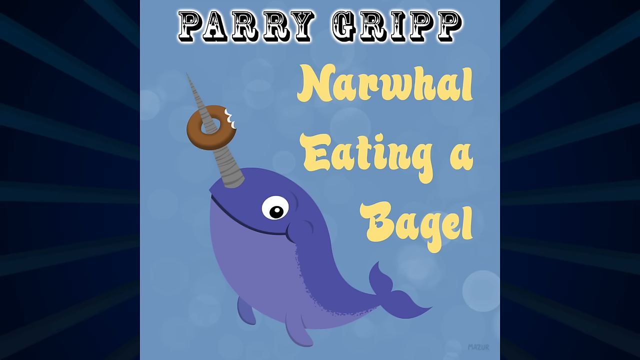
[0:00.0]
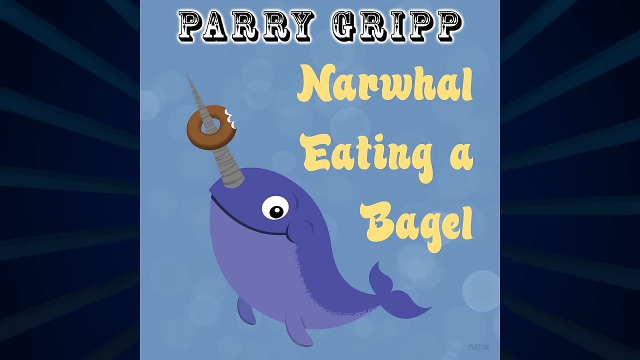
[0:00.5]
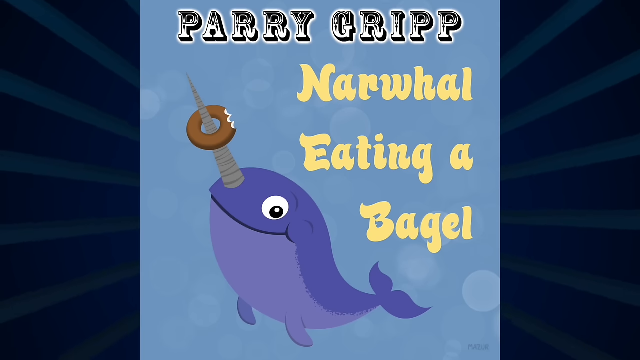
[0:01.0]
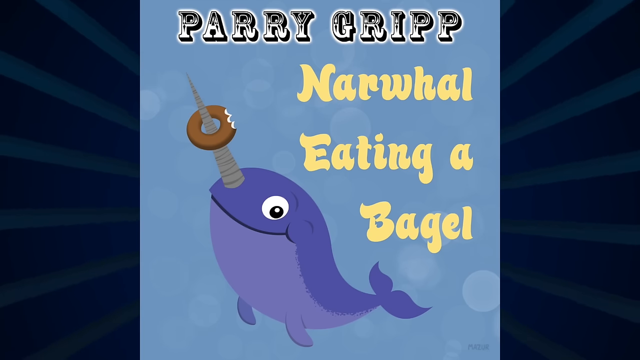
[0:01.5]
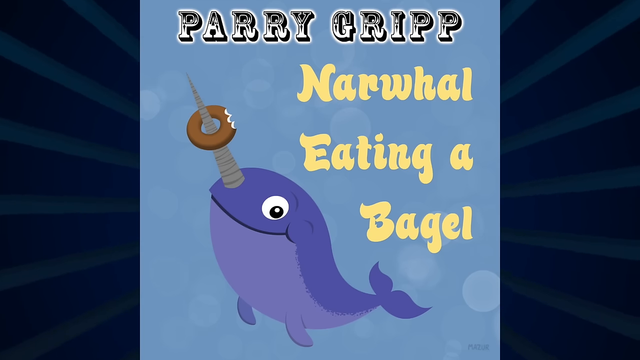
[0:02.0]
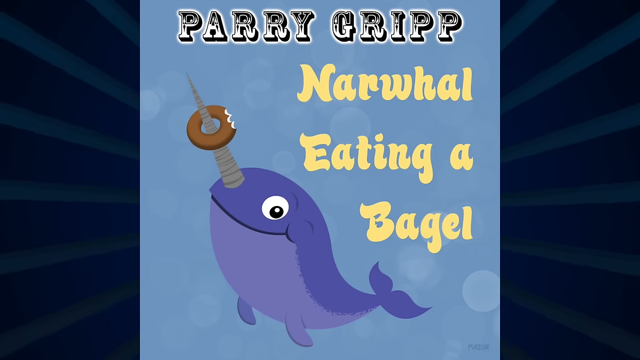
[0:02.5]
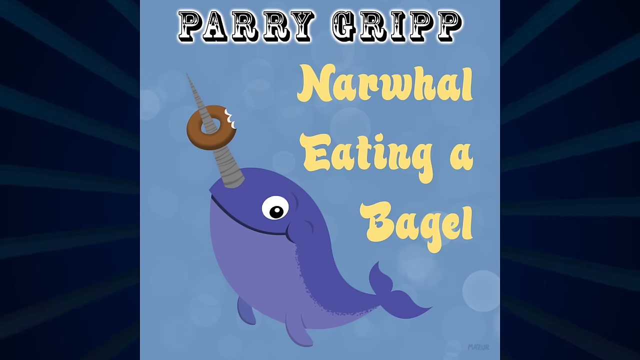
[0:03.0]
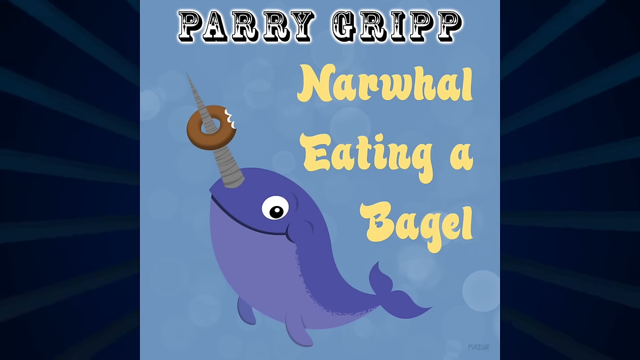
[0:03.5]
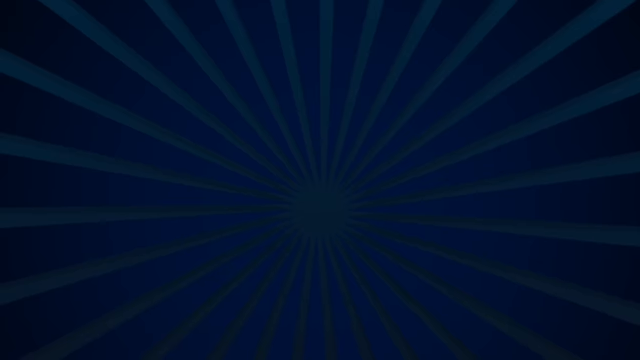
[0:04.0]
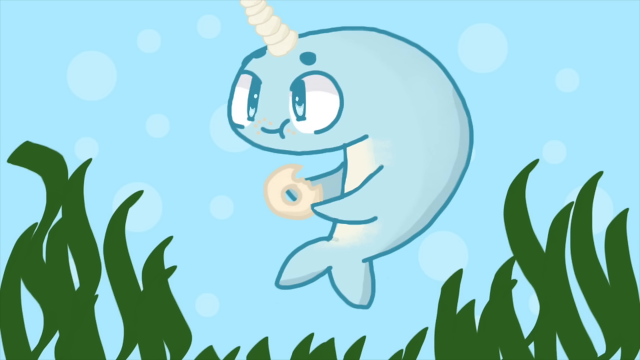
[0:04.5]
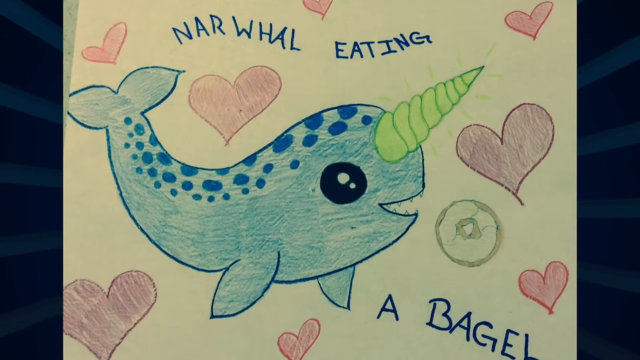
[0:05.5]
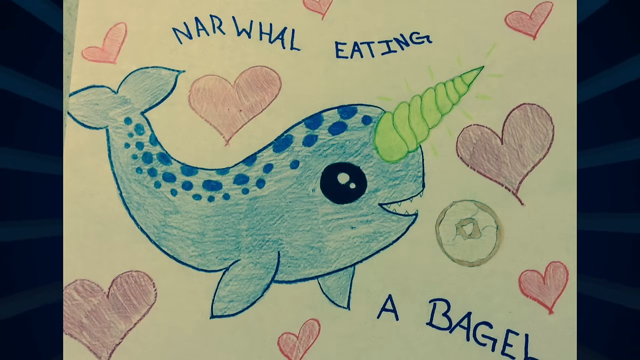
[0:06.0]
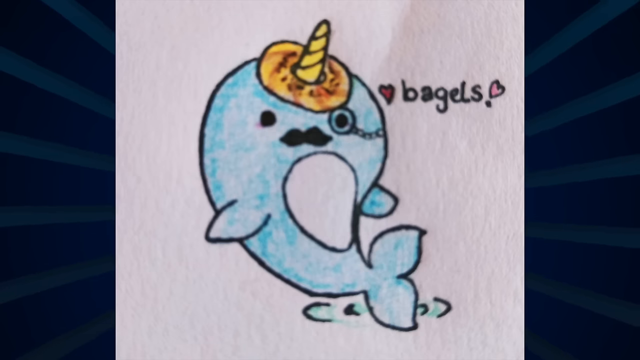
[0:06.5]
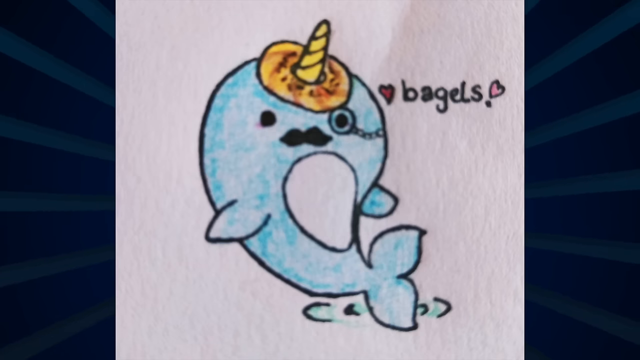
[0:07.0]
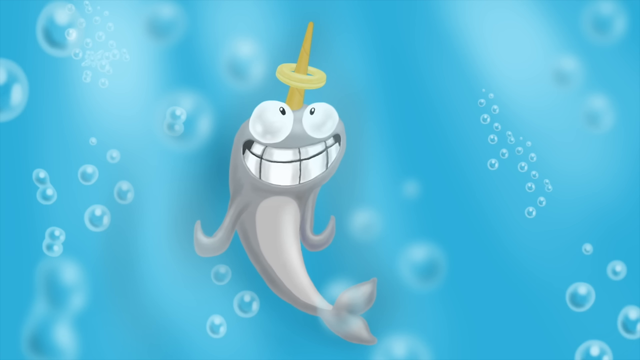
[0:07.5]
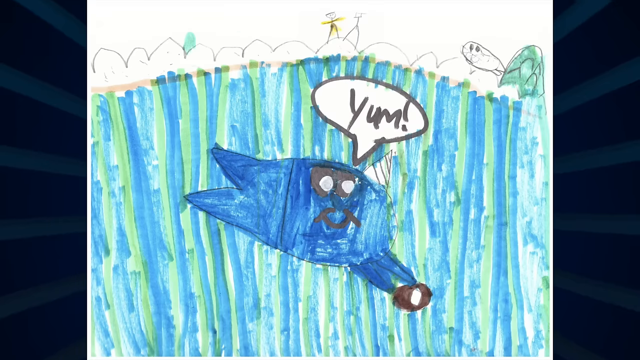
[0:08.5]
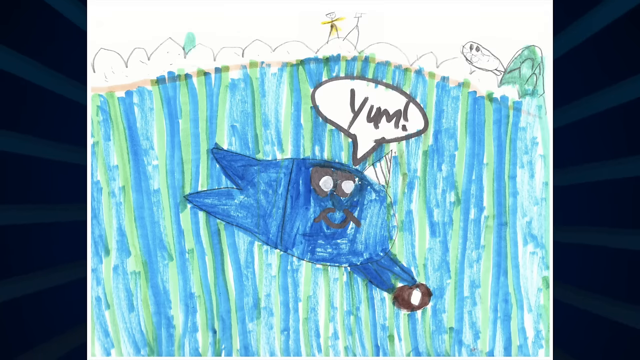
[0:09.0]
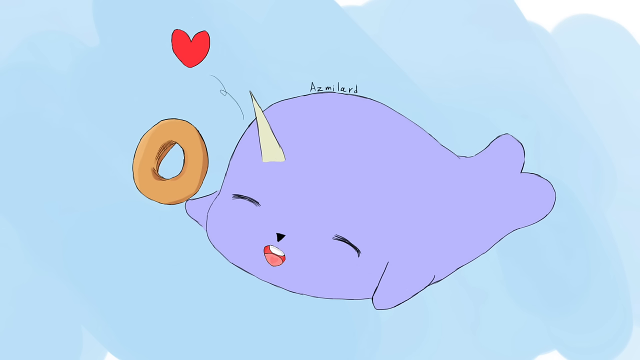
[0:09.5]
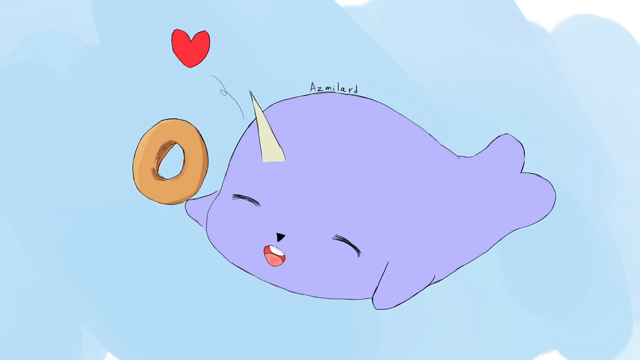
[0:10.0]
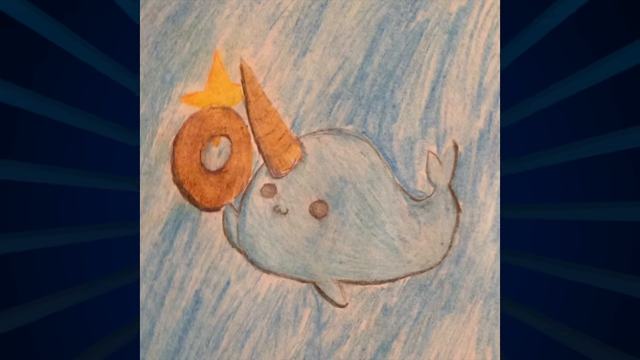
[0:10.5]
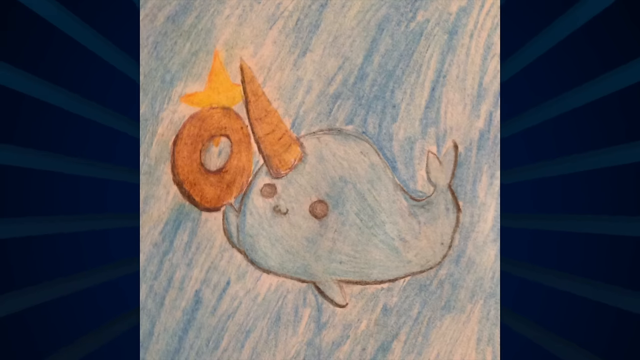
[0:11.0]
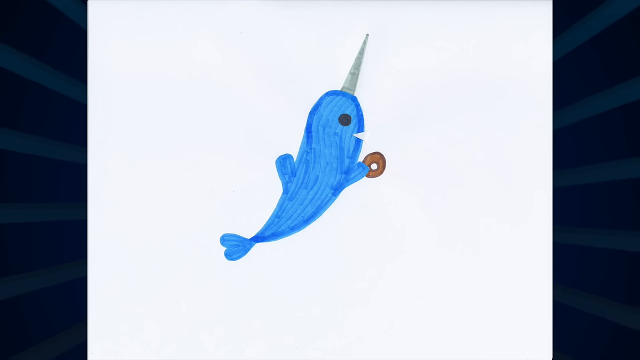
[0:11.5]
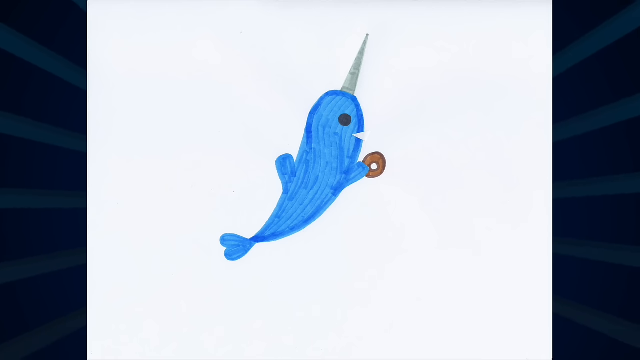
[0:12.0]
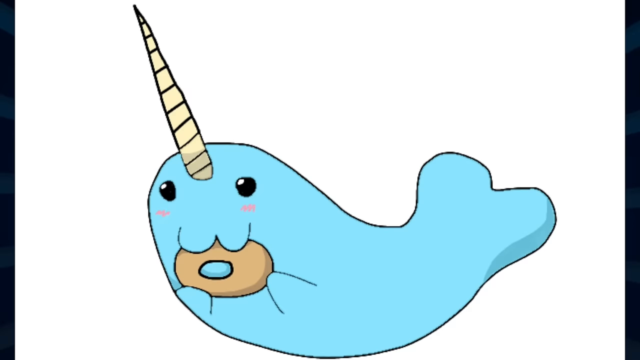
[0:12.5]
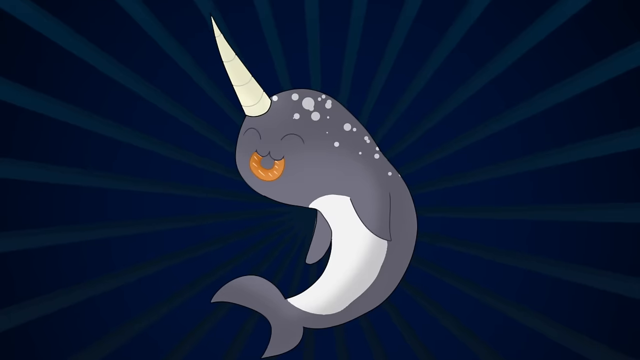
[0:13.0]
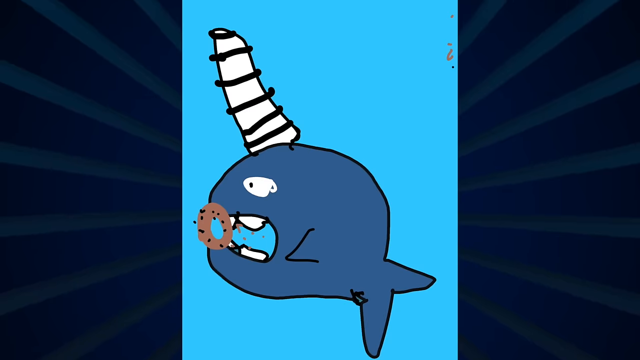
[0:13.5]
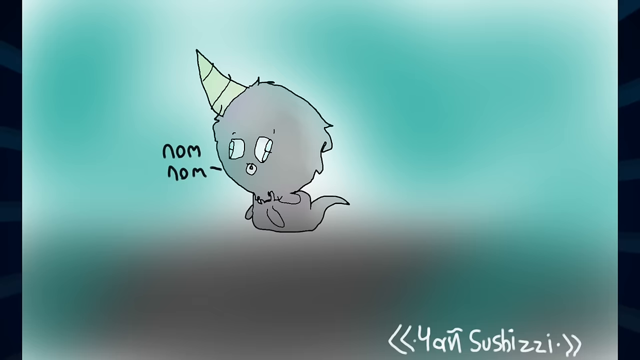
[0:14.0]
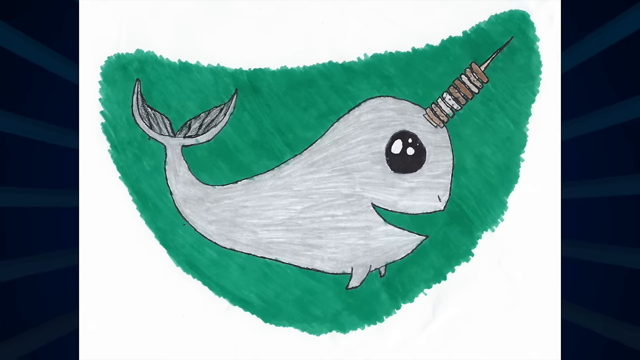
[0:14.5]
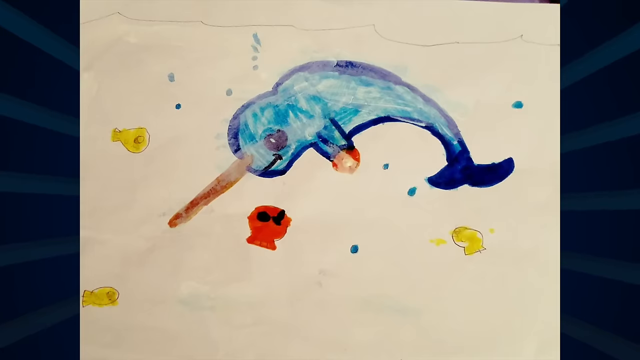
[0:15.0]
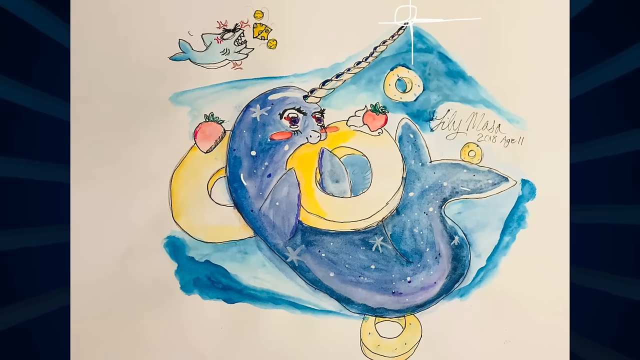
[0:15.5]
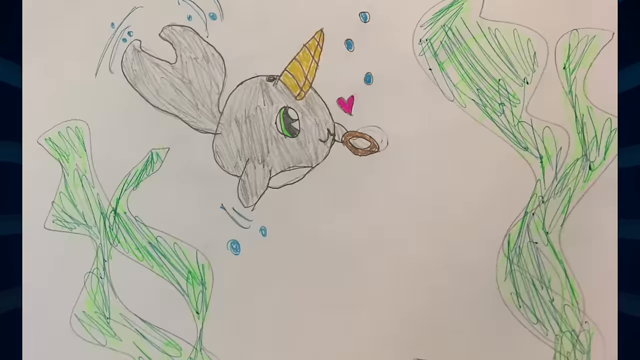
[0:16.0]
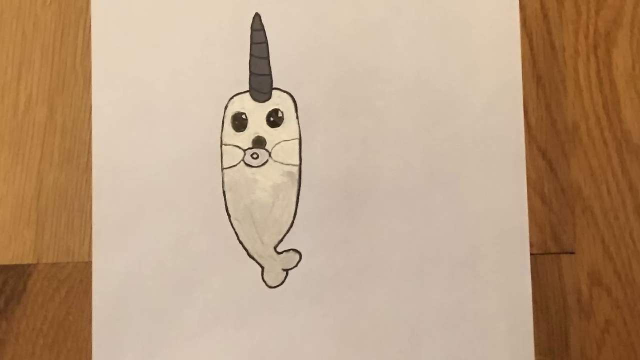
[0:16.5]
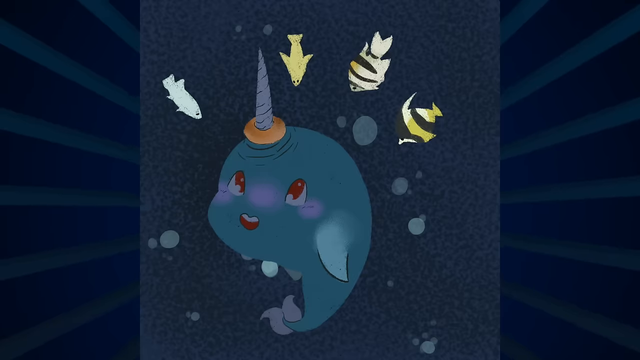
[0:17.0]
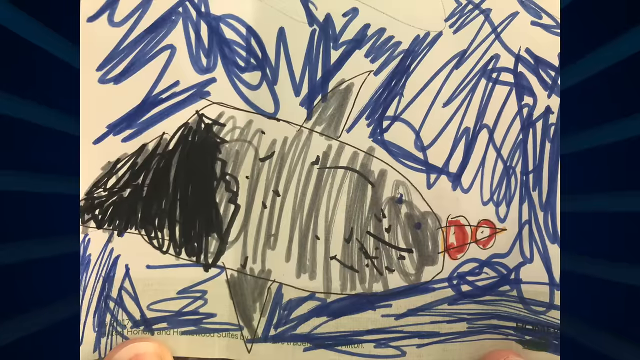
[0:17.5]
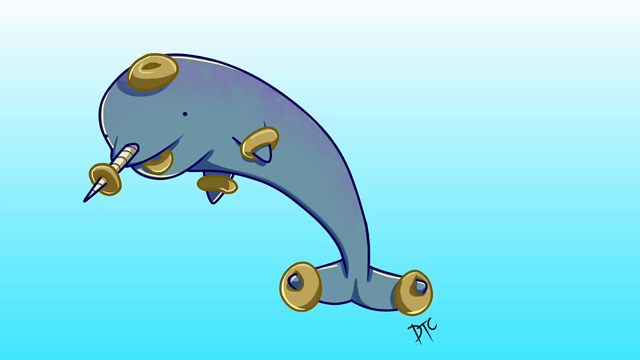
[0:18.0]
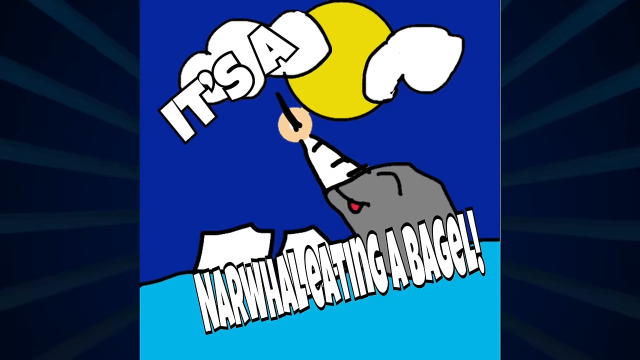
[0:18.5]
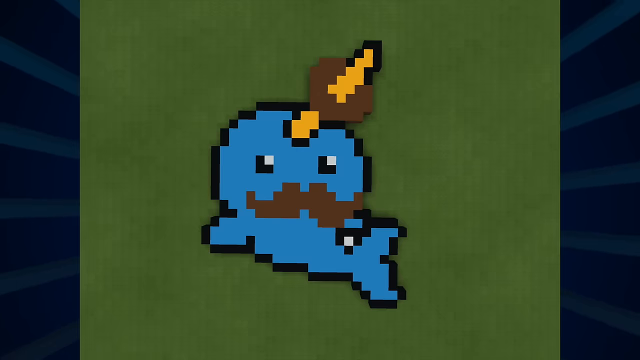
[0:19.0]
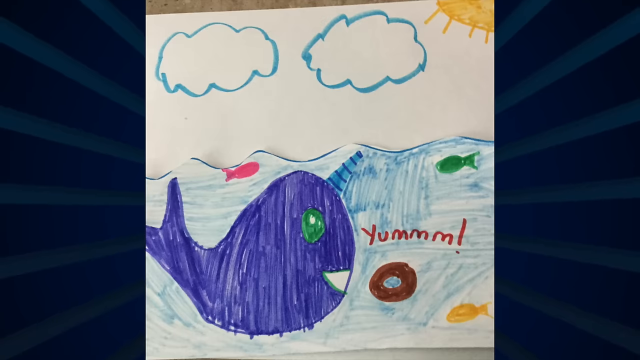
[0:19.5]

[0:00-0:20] The video opens with a picture of Parry Gripp Narwhal Eating a Bagel: a blue narwhal with a smile on its face and a brown bagel with a bite mark on it placed on its horn. Several drawings of the narwhal follow that appear to be fan art. One shows a light blue narwhal with a mustache and a bagel with hearts on its horn. Another shows a cartoonish narwhal smiling really big, with both eyes facing inward toward the bagel. Another shows the narwhal in the water eating the bagel and saying "yum." Another shows the narwhal with a cute anime face, holding the bagel with its fins and taking a bite of it. The drawings are made in different mediums, from crayon, pencils and markers to digital art styles.